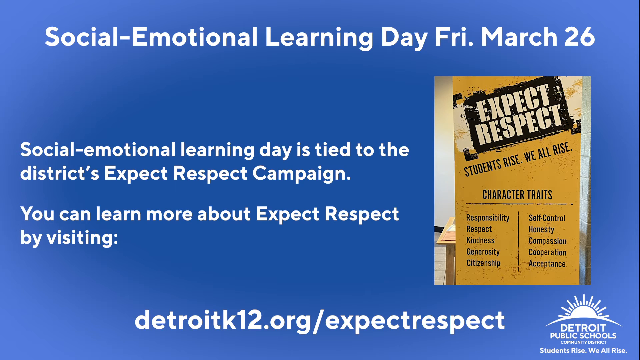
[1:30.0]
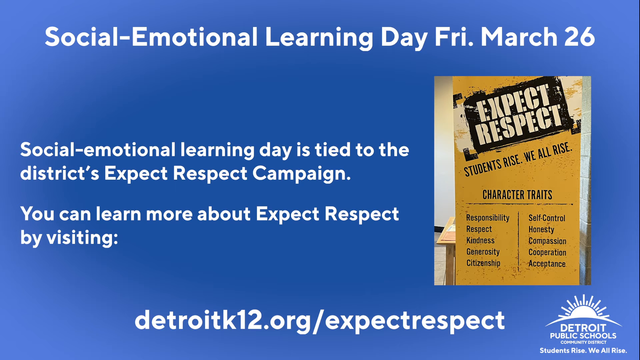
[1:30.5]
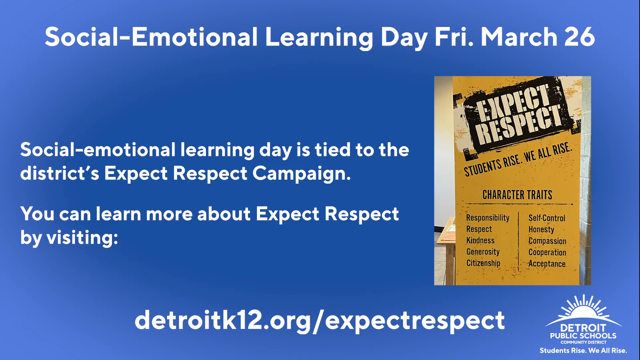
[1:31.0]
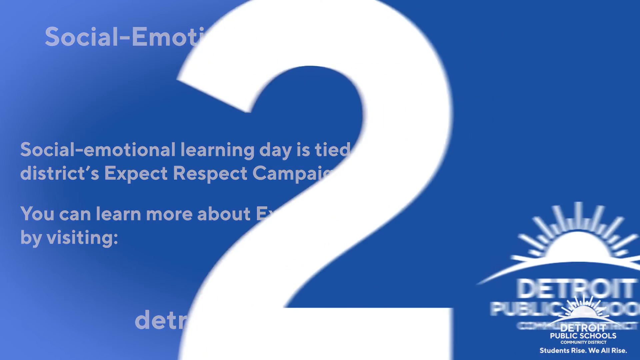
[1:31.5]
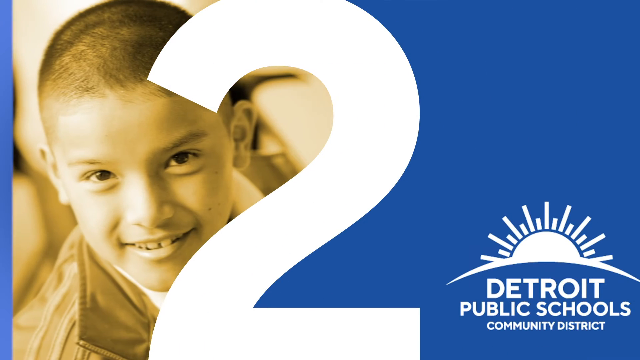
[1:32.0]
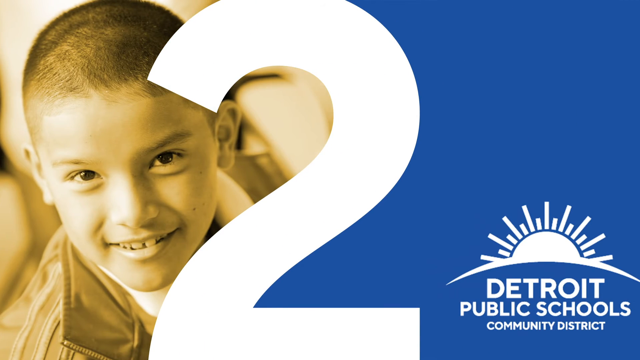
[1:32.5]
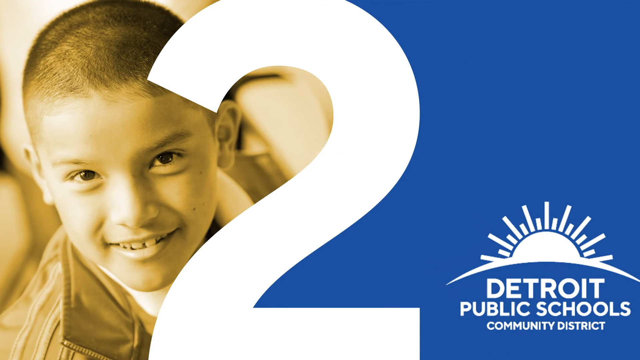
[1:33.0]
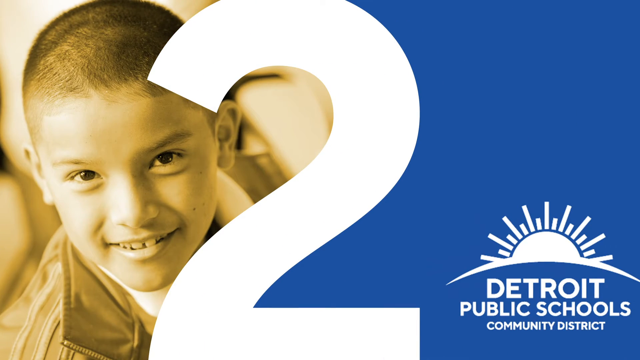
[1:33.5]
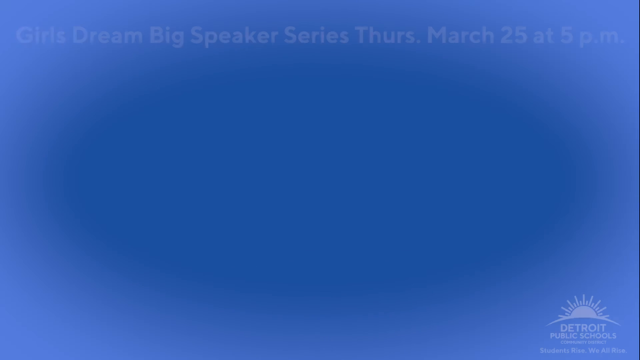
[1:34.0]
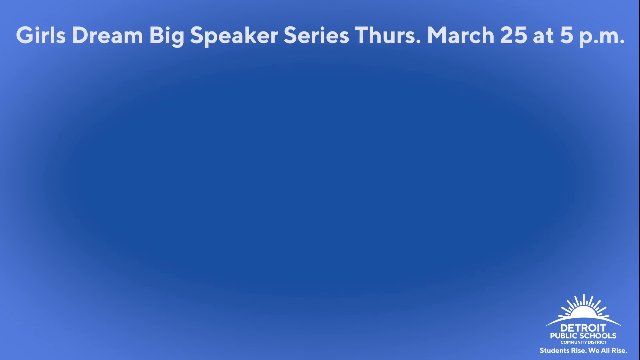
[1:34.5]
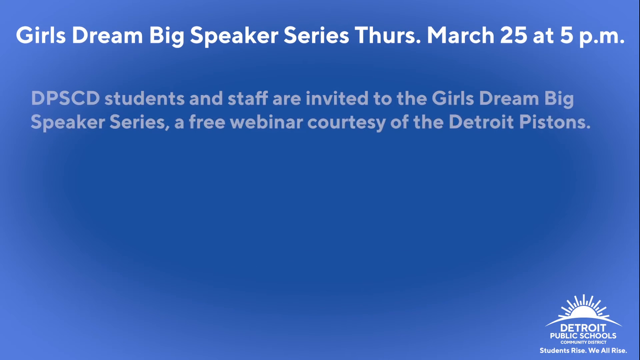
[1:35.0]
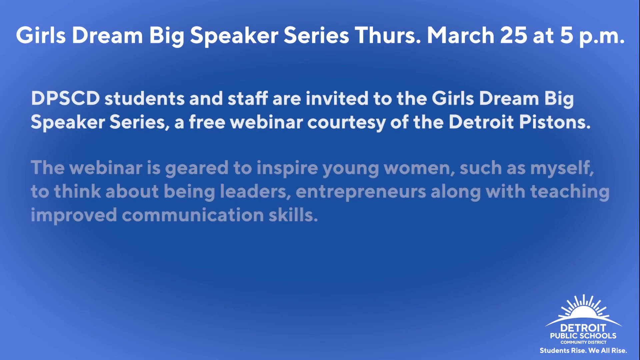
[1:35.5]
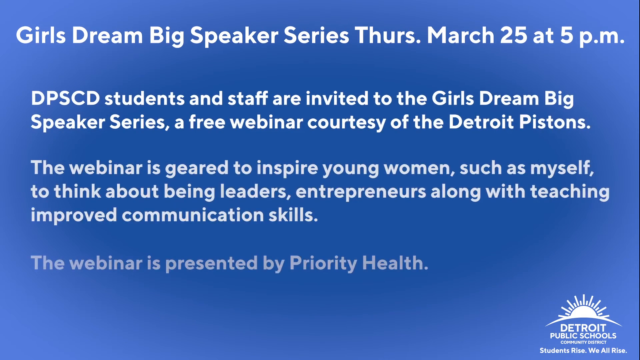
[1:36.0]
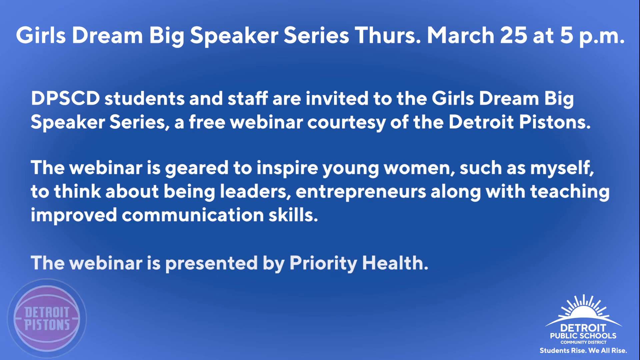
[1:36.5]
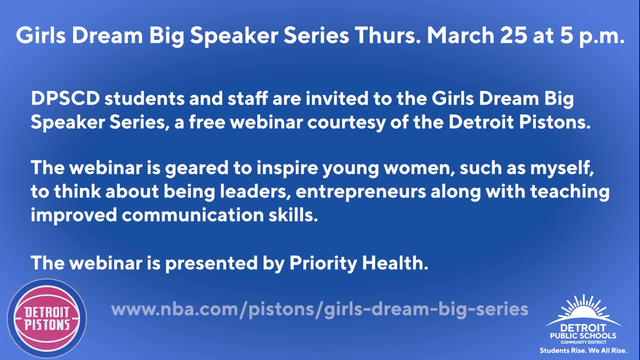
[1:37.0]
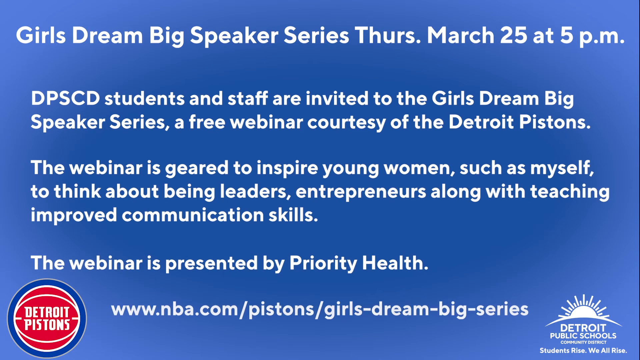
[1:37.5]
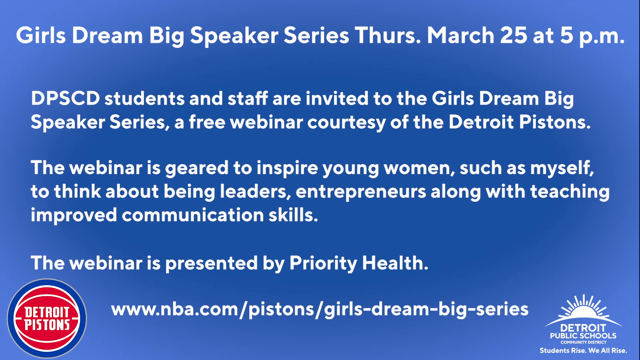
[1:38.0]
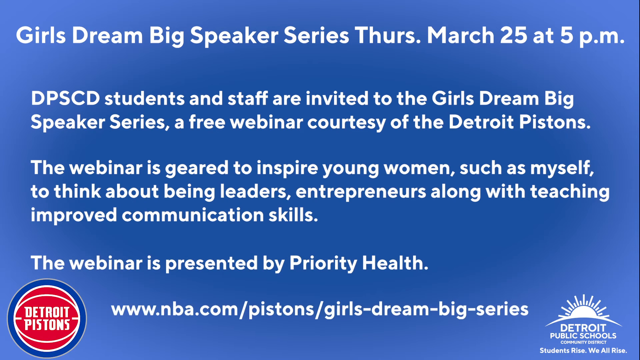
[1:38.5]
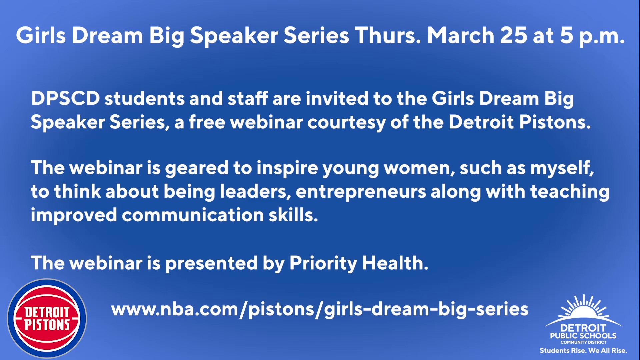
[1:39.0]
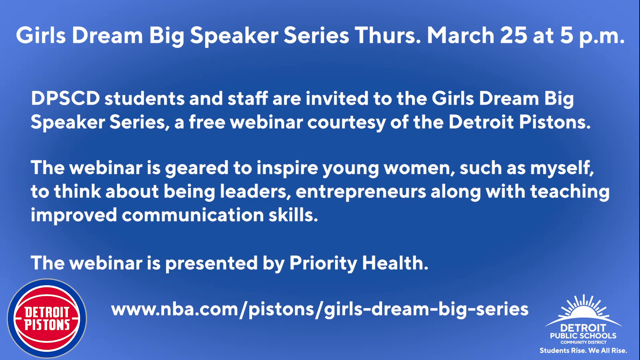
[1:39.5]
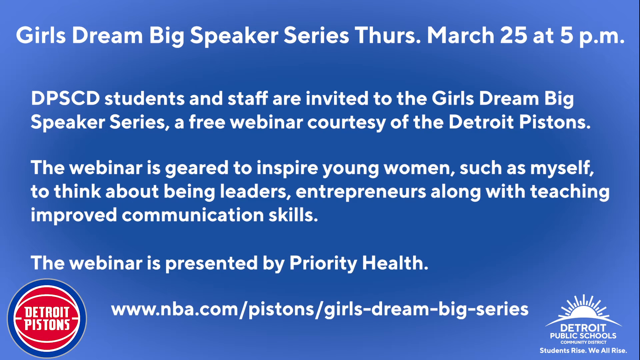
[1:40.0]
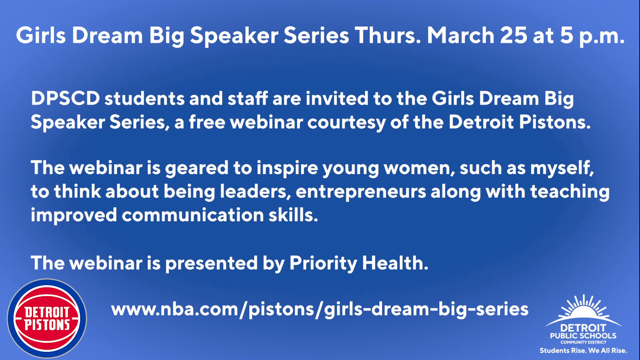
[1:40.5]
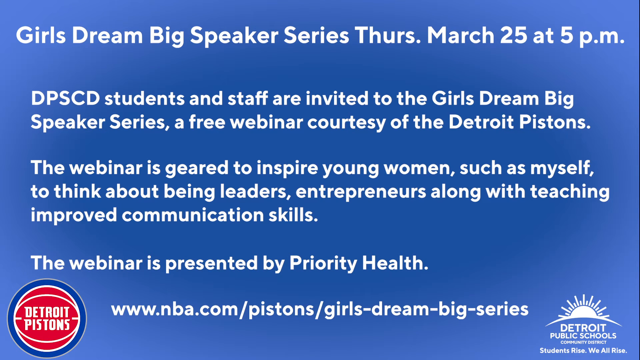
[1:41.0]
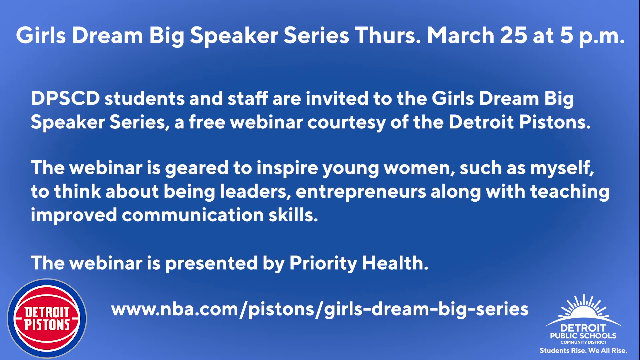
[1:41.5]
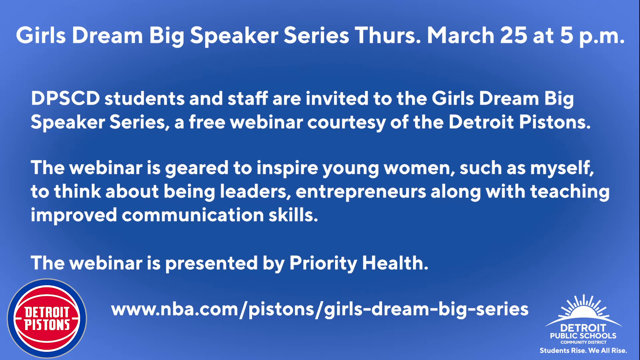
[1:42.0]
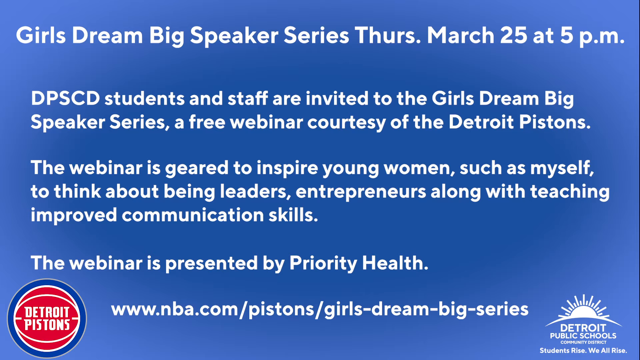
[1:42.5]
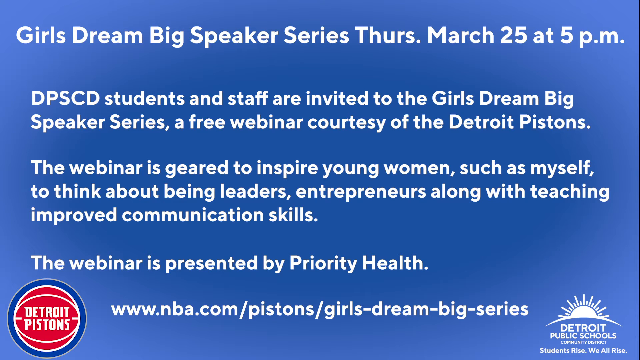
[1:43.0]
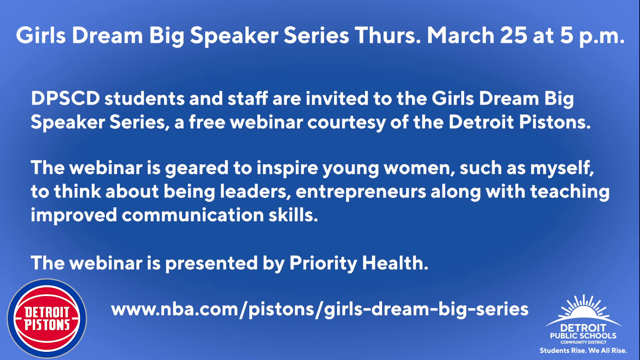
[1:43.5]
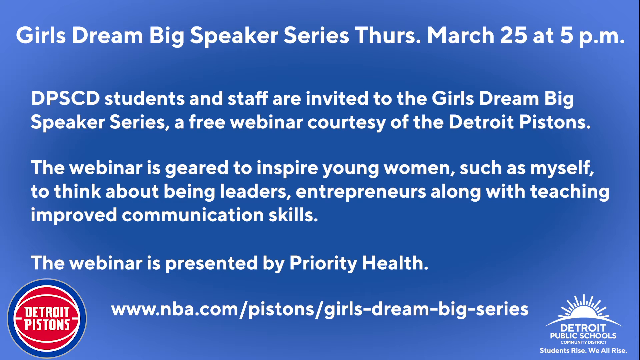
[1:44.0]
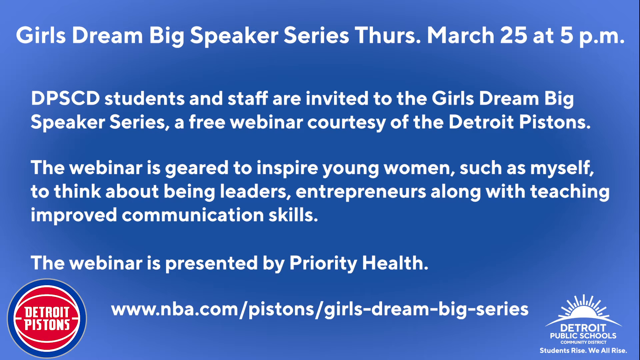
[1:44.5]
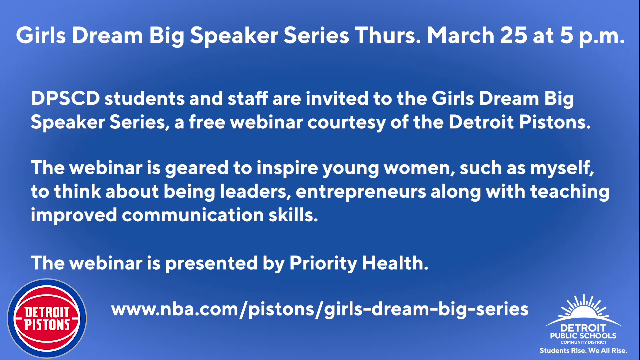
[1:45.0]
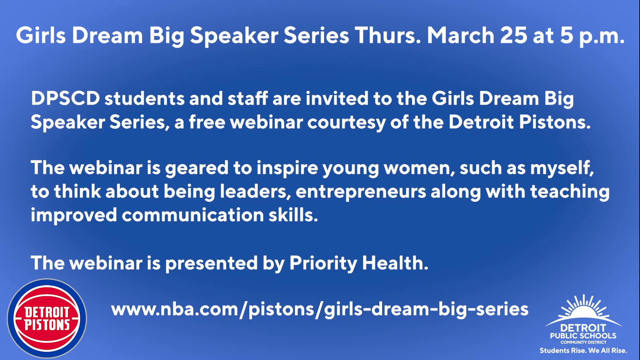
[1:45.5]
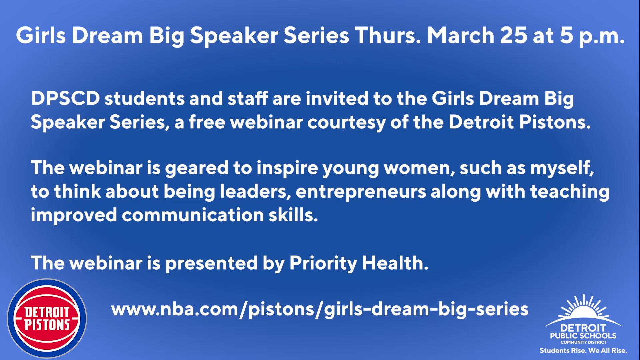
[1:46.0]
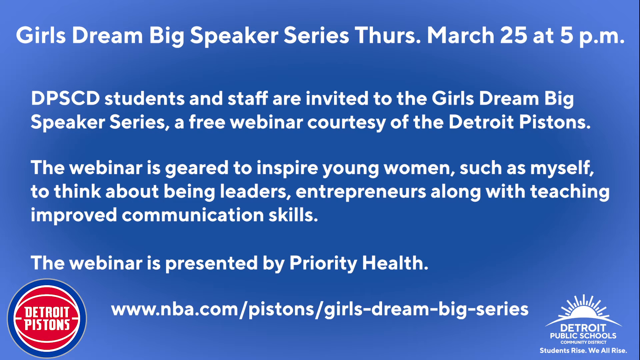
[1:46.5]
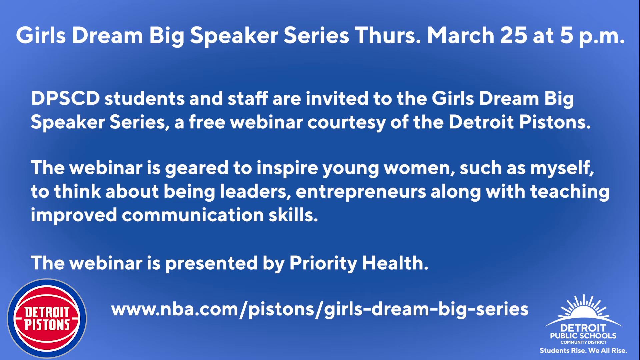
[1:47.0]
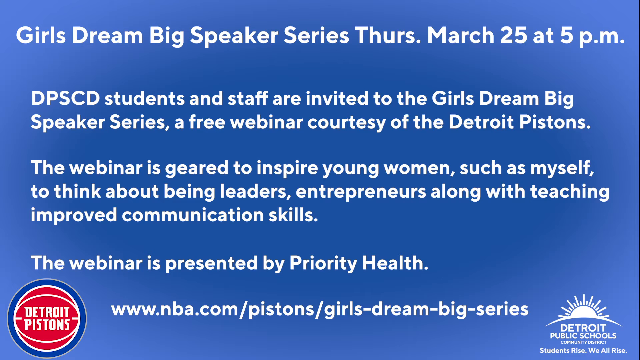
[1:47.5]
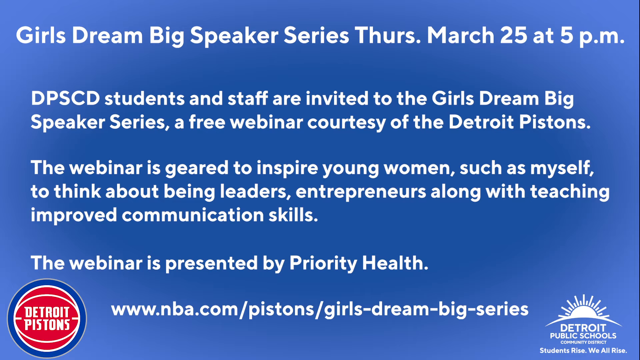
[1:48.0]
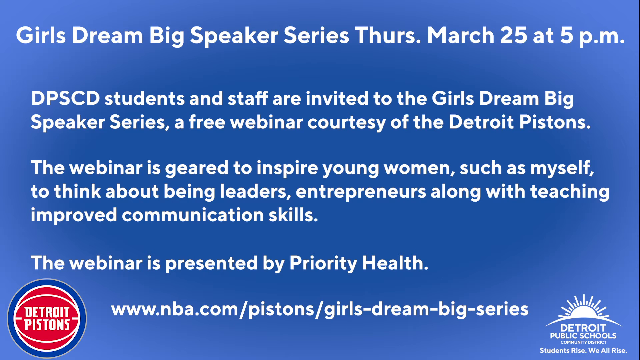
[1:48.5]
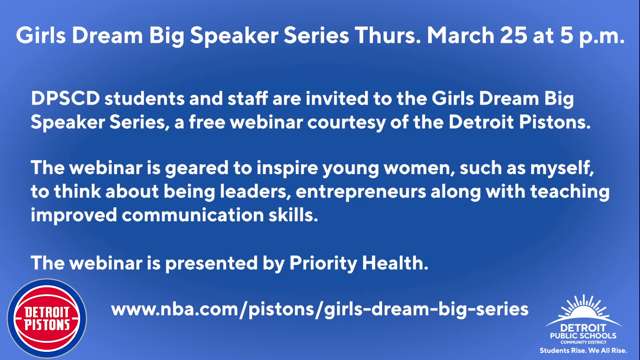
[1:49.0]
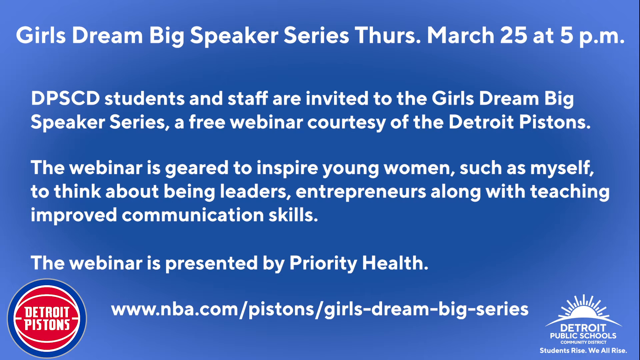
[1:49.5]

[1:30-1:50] The video transitions to a page with a giant white 2 in the center. To the left is a photo of a little boy smiling at the camera with a vintage-type filter, and the right-hand side is blue with the Detroit Public Schools Community District sunshine logo. It then transitions to a blue screen that says, in white letters, "Girls Dream Big Speaker Series, Thursday, March 25th at 5 p.m." Below that it says "DPSCD students and staff are invited to the Girls Dream Big Speaker Series, a free webinar, courtesy of the Detroit Pistons." The text goes on to say the webinar is geared to inspire young women to think about being leaders and entrepreneurs, along with teaching improved communication skills, and that it is presented by Priority Health. A link to the website, "www.nba.com/pistons/girls-dream-big-series," follows, and beside the website is a Detroit Pistons logo.